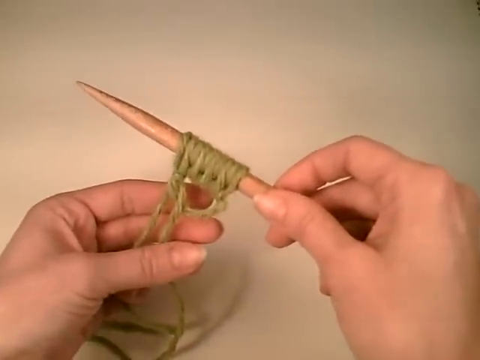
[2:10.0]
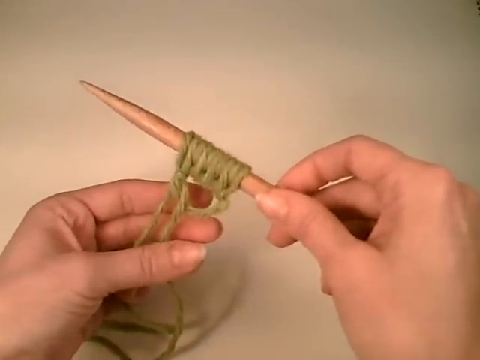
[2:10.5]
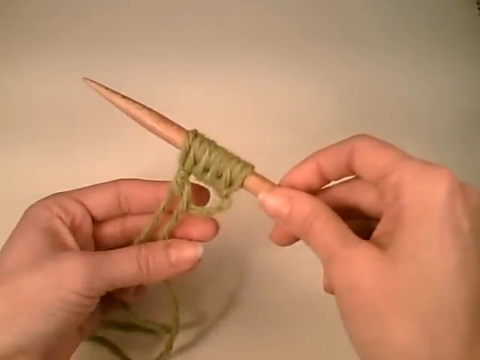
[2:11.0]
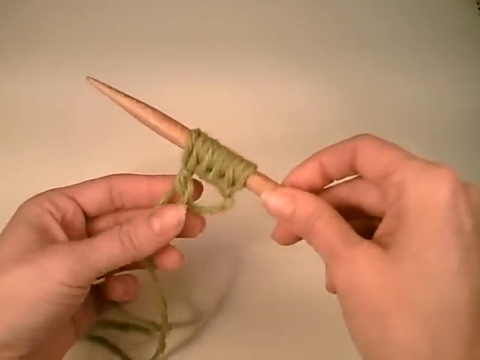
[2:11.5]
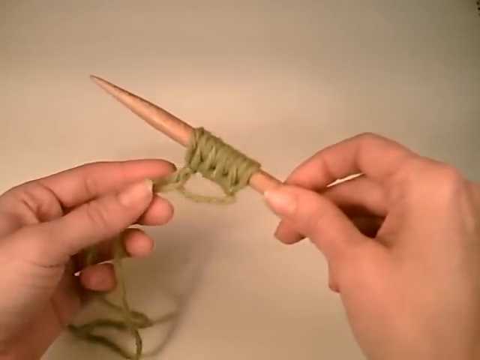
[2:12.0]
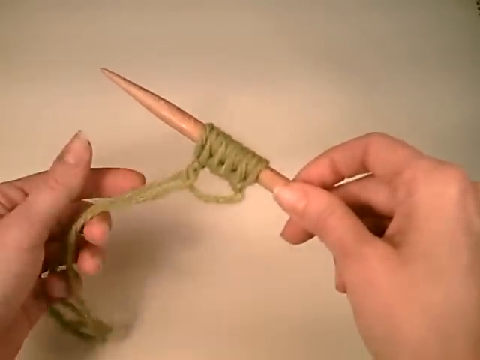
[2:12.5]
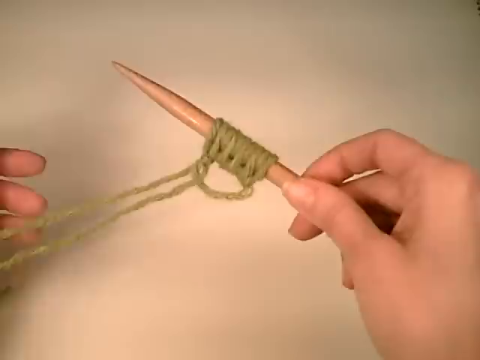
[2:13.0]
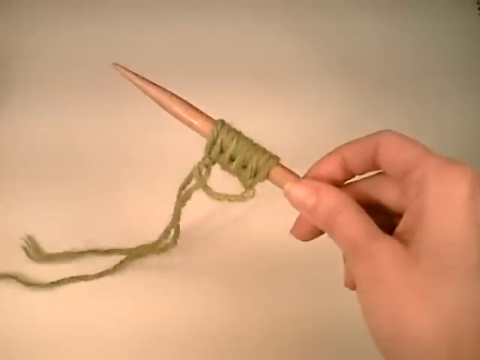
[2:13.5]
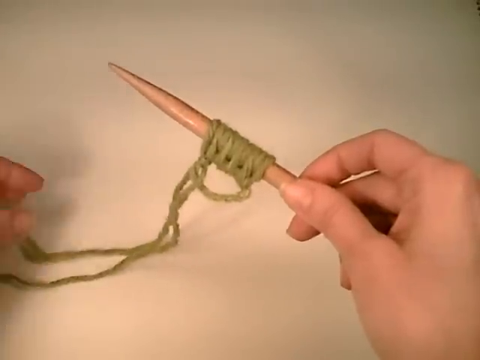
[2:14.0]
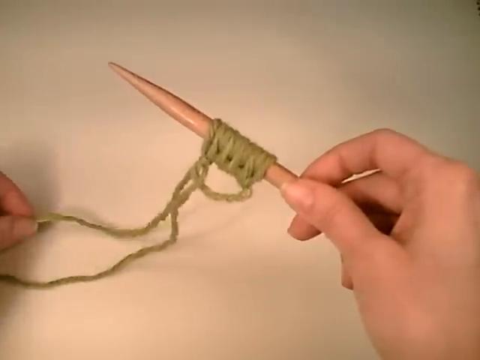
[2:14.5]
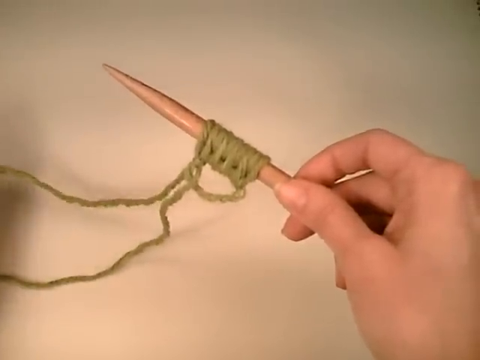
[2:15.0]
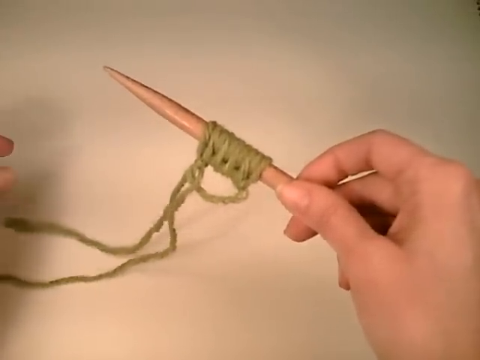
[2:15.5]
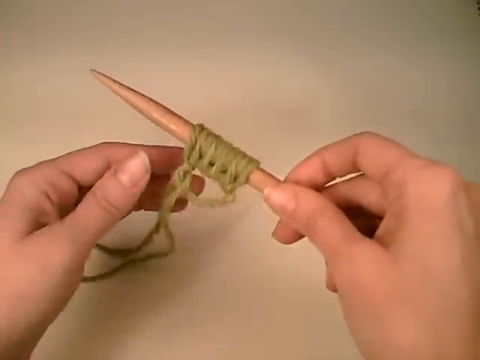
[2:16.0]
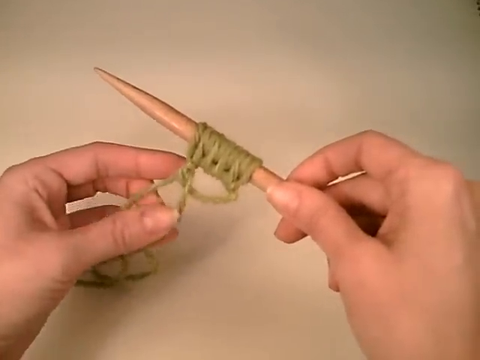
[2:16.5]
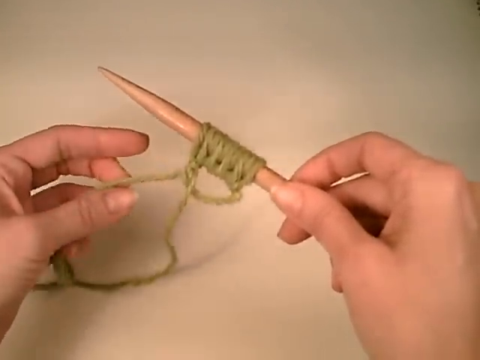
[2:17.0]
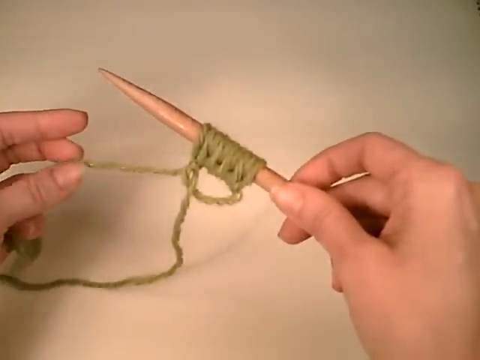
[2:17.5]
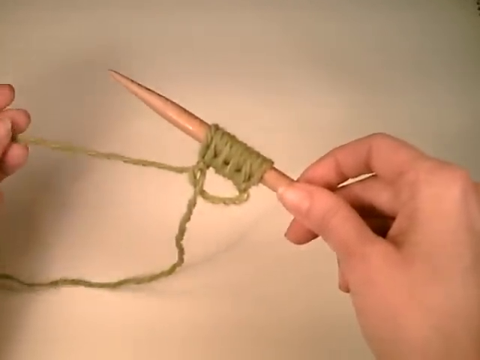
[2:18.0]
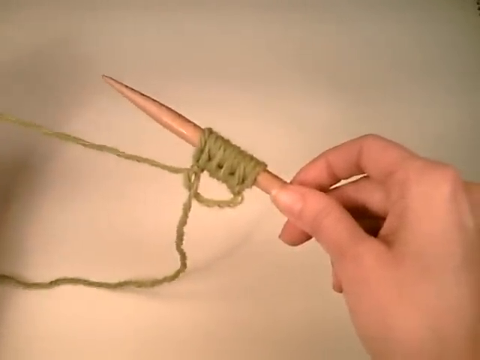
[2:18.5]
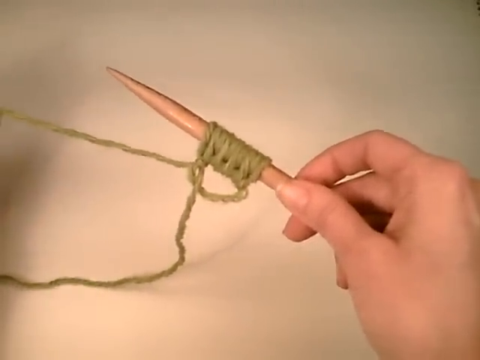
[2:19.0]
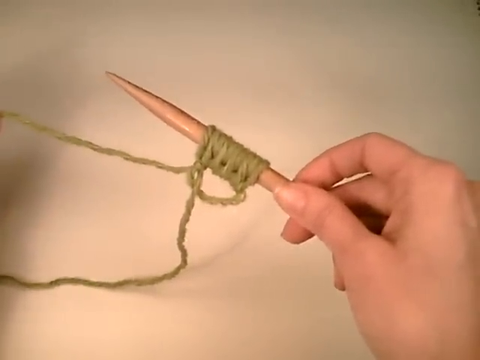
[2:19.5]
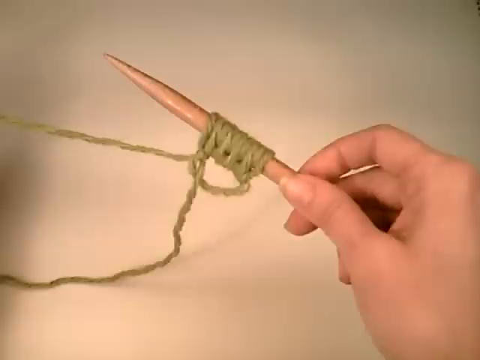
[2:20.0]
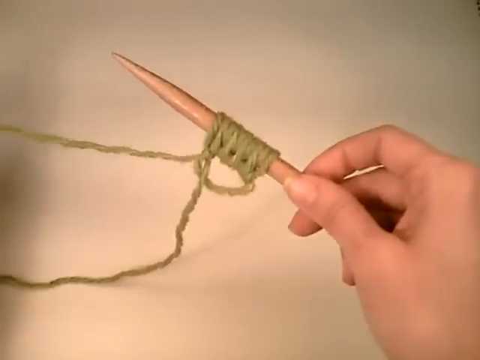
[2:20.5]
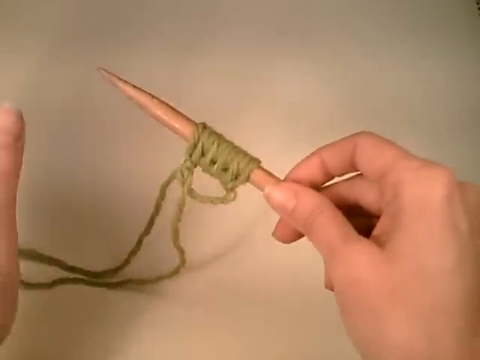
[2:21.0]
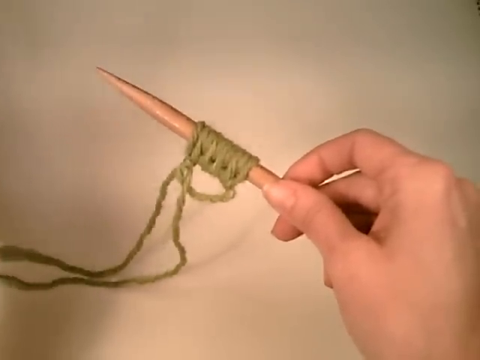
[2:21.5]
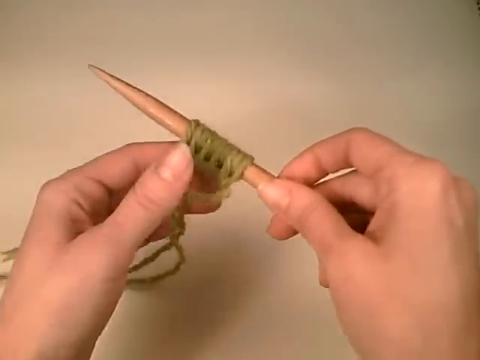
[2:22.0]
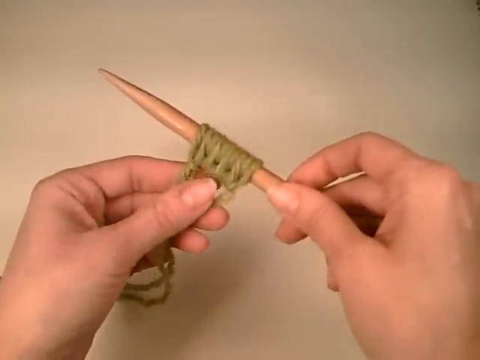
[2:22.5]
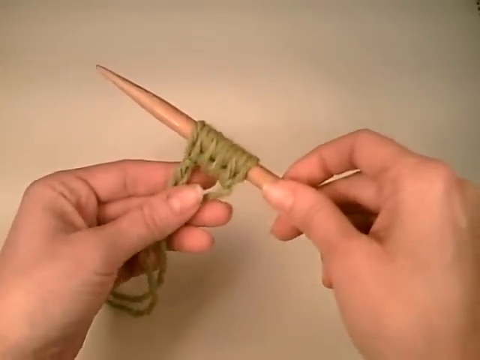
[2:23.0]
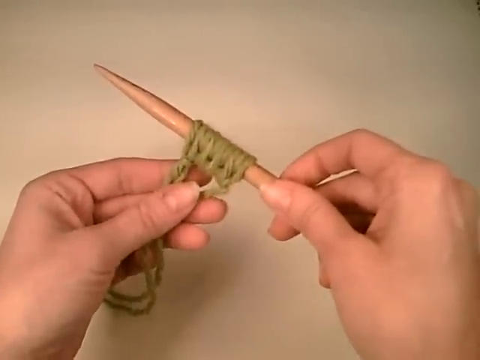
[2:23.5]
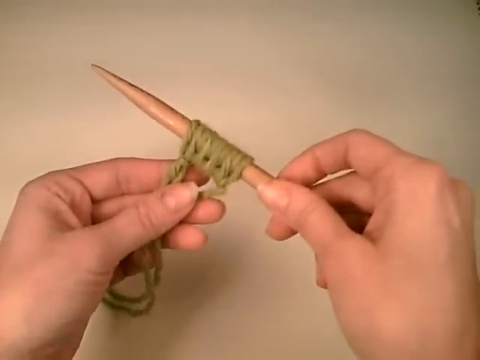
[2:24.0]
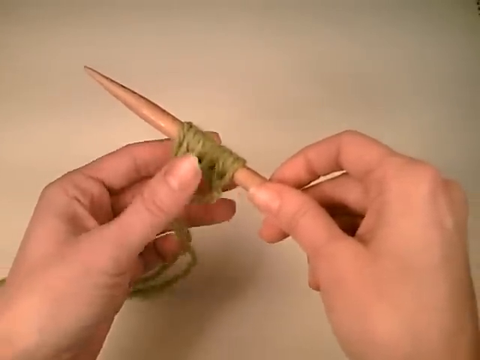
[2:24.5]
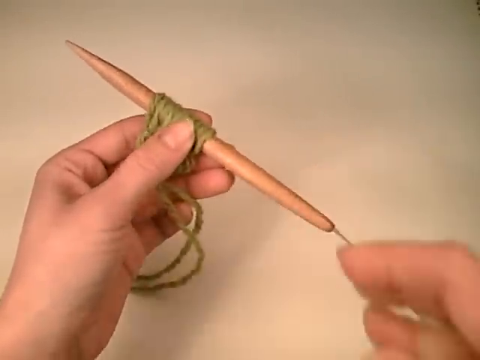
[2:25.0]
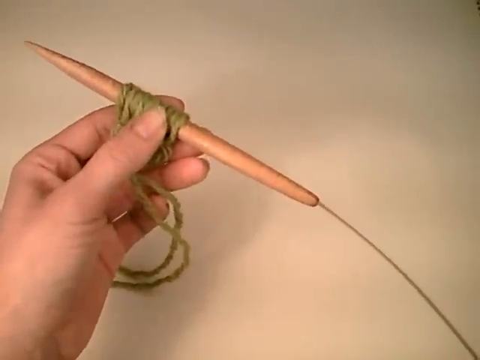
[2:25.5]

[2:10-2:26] Someone holds a wooden knitting needle in the right hand and part of a golden thread in the left hand against a brownish background. The person seems to have been knitting already. On the stem of the needle are ring-like knots, probably more than 10, and below the mostly intertwined part on the stem there is a round knot that is opened. Shadows of the hands, thread and needle are reflected on the background. Toward the end, the bottom part of the needle is visible, with what also looks like a thread attached to it. The person is probably a white woman, based on the skin, and appears to have a relatively grown nail on both thumbs.